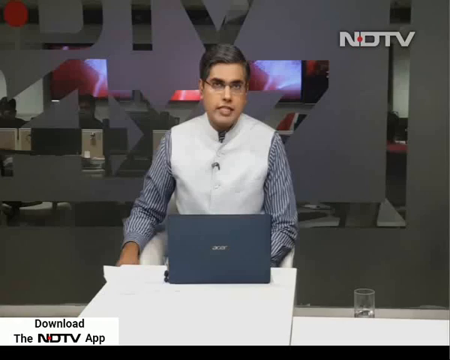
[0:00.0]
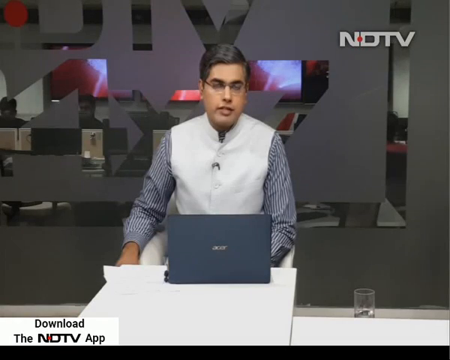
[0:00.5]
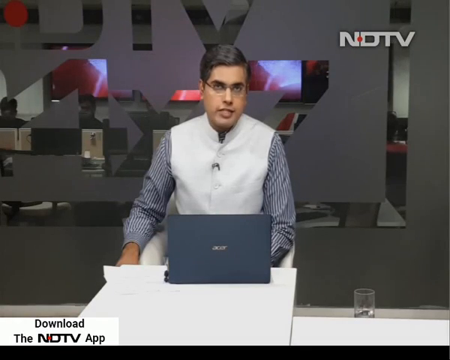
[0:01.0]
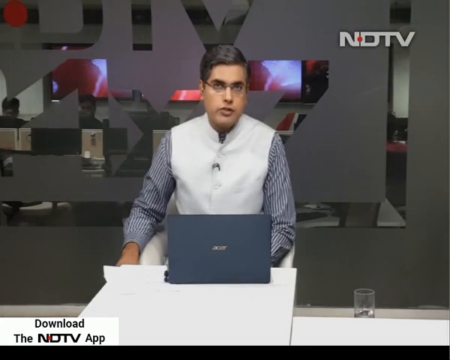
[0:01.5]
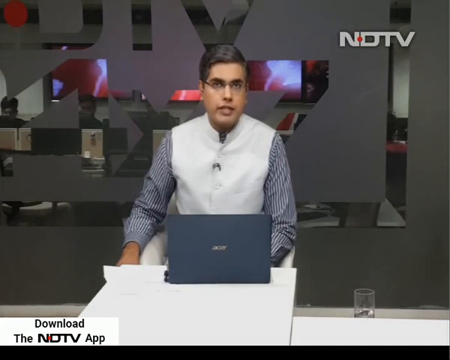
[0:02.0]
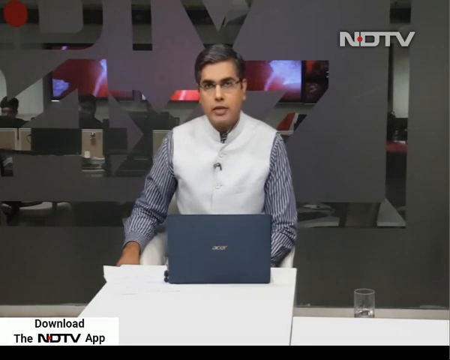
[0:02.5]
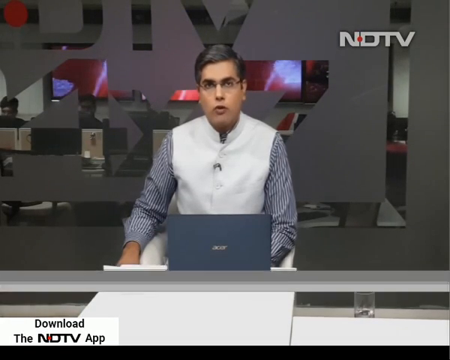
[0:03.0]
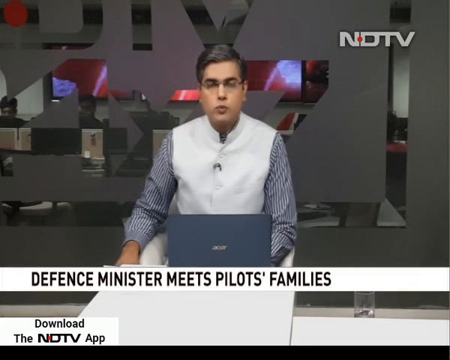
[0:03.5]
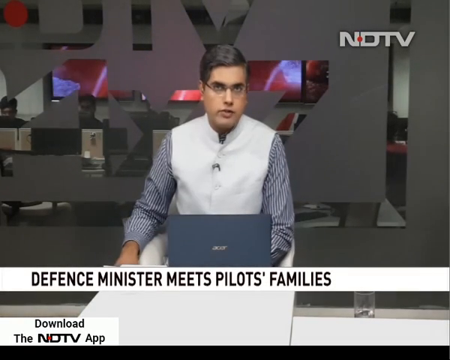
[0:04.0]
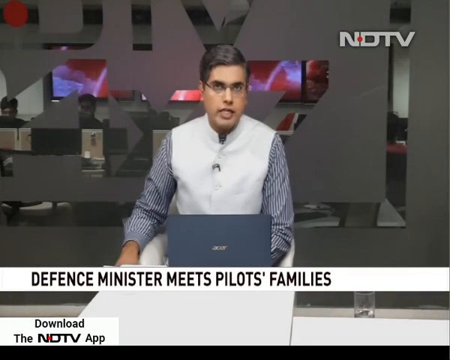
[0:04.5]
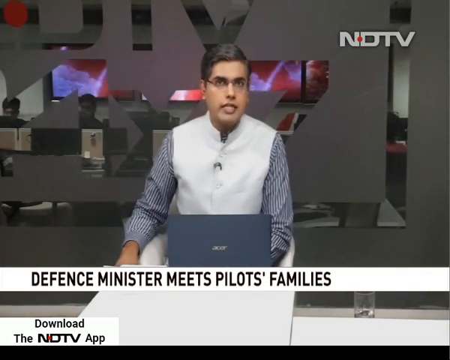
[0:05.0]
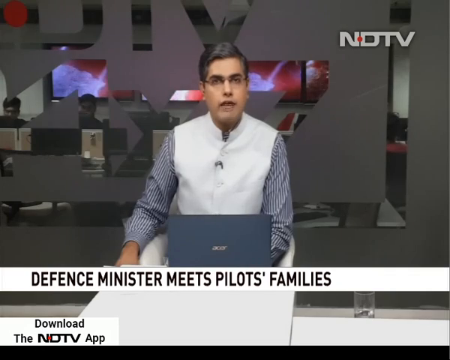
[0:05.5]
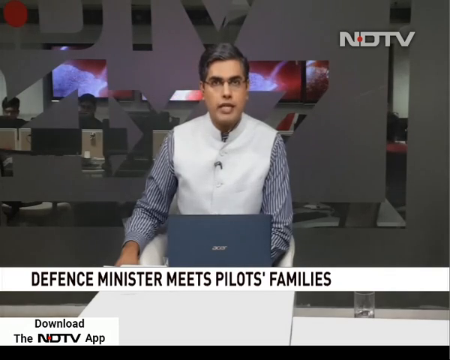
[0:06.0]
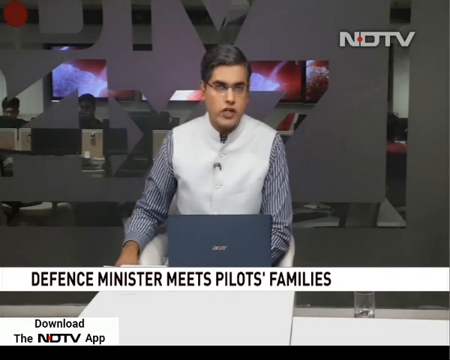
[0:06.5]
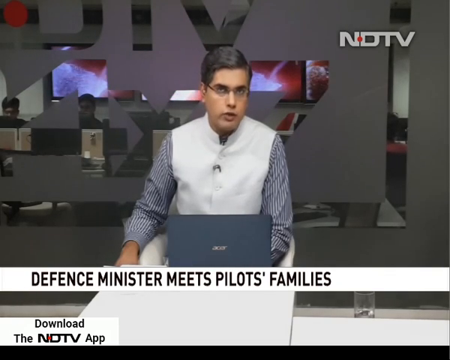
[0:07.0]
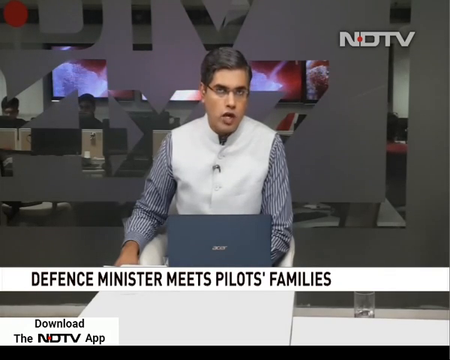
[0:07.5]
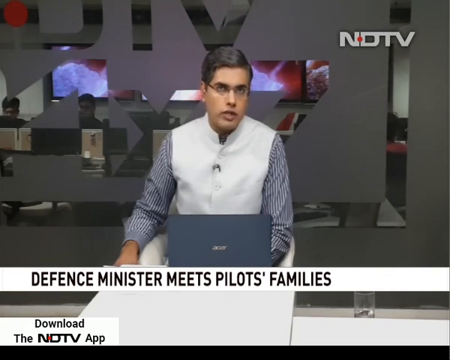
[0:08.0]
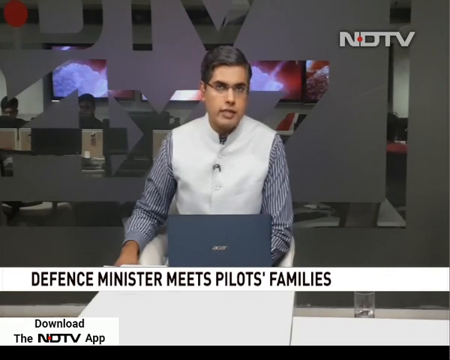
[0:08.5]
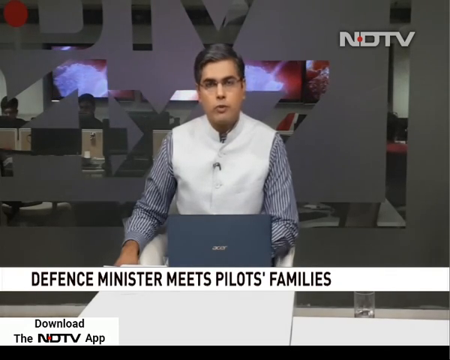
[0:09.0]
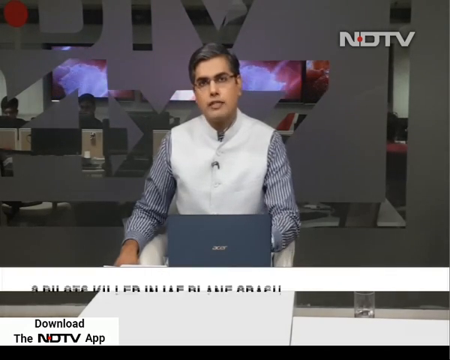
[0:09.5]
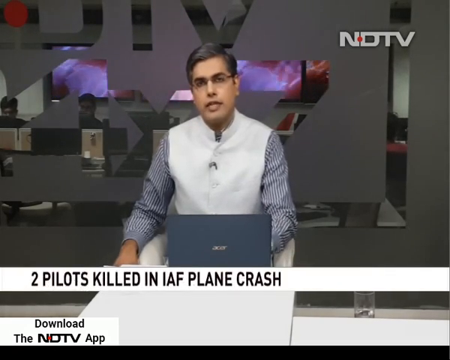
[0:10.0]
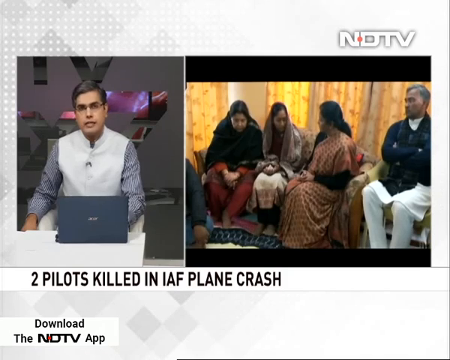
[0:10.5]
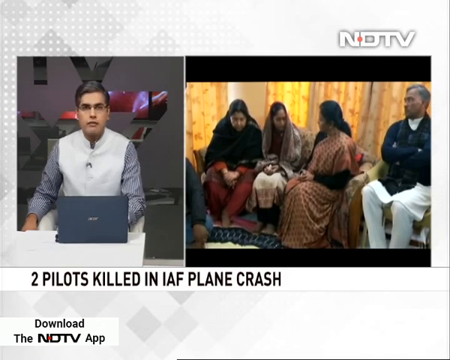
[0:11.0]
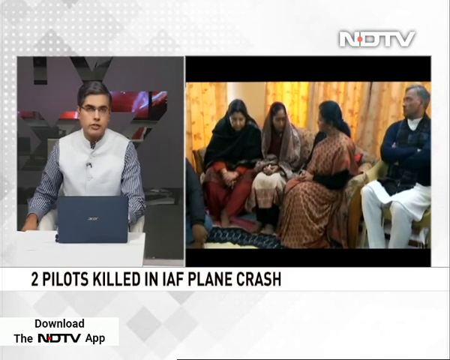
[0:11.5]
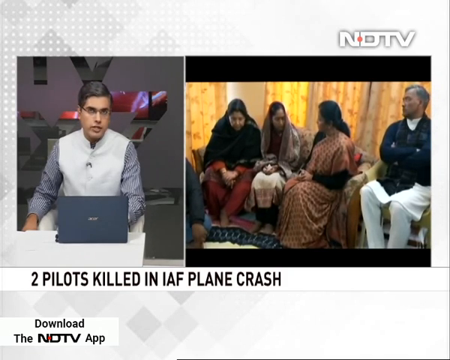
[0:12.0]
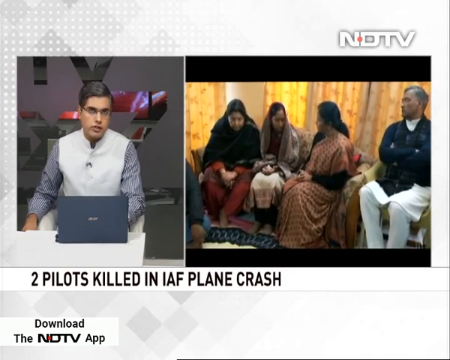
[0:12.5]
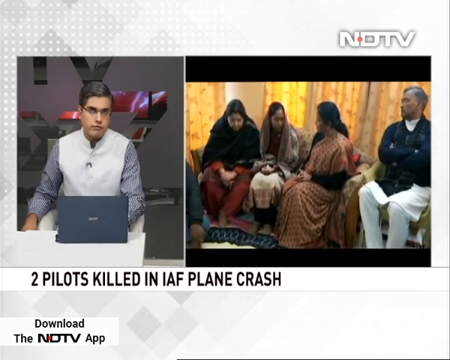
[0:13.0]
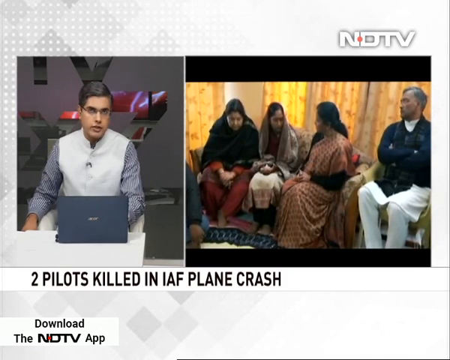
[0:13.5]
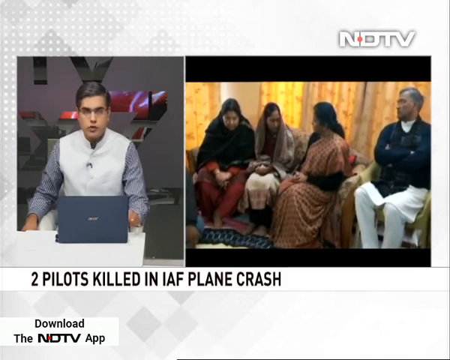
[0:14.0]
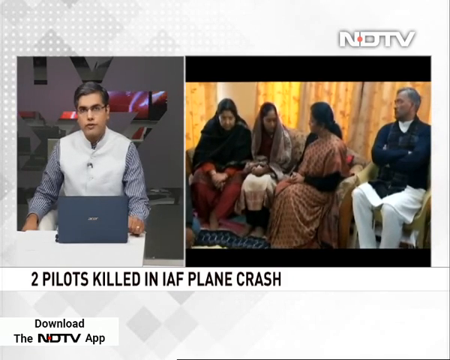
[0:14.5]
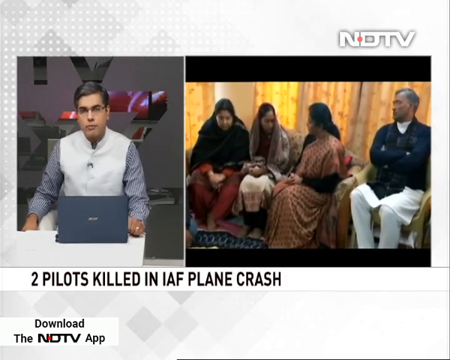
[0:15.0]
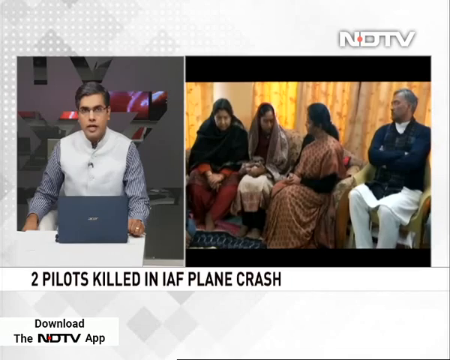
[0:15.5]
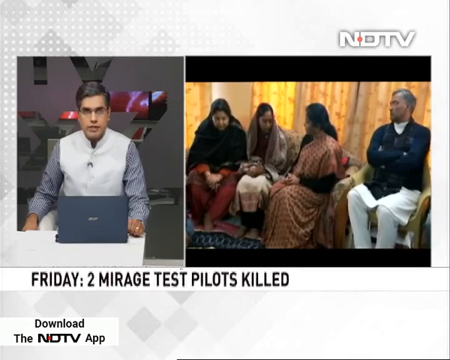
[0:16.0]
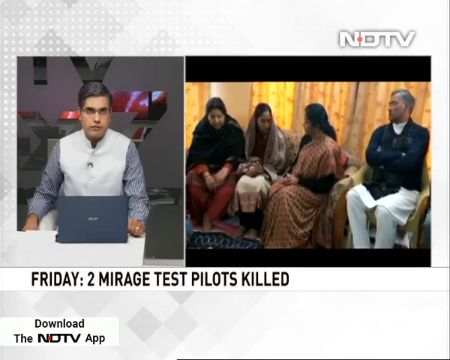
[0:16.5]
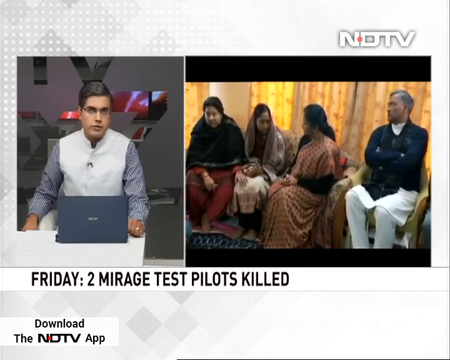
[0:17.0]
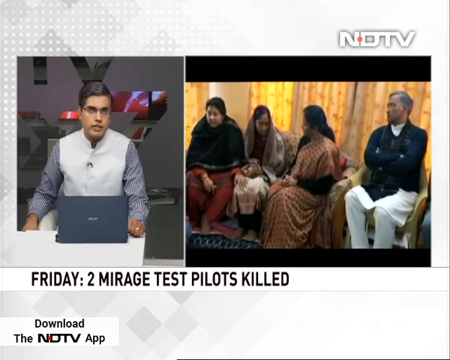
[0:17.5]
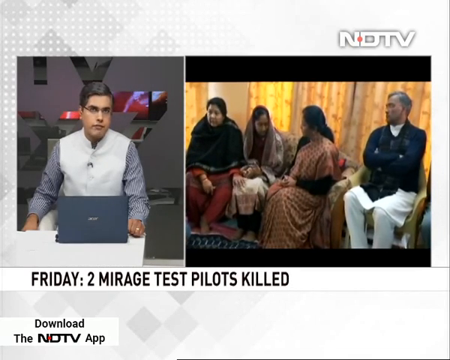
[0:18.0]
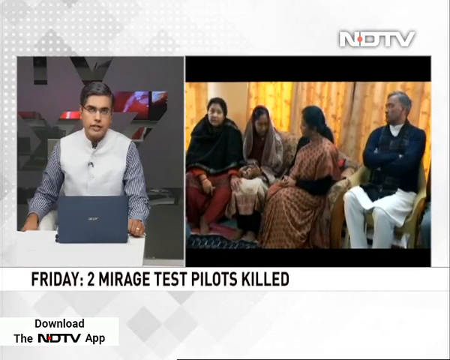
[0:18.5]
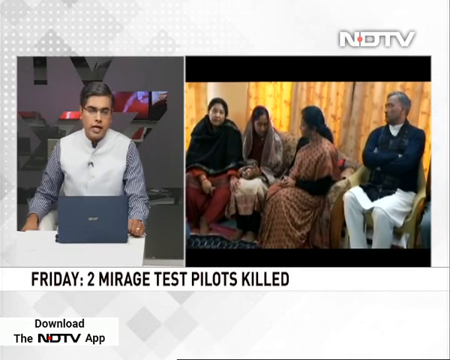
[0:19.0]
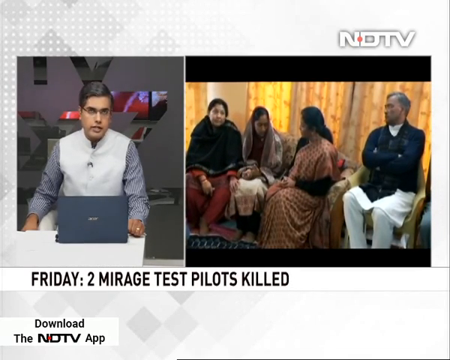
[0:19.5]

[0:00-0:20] A man talks directly to the camera. He appears to be Indian, has black hair, wears glasses, and is dressed in a white waistcoat with a blue striped shirt. The word "NDTV" is in the top right corner, and the bottom left corner offers the option to download the NDTV app. A heading pops up reading "Defence Minister meets pilot families", followed by "two pilots killed in an IAF plane crash". Members of a family are then shown; they seem to be in great sadness and appear very emotional. Two or three females are visible, and to the far right there is a man wearing a black jacket with white pants.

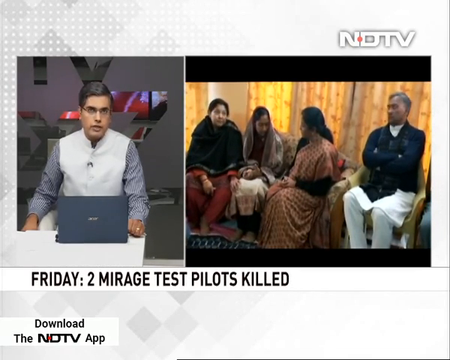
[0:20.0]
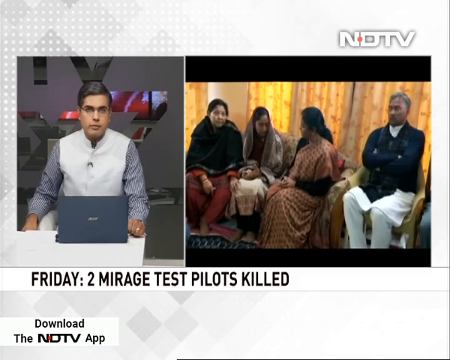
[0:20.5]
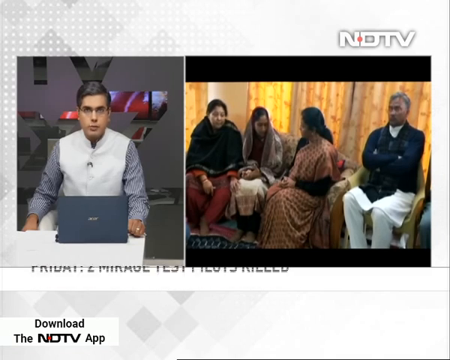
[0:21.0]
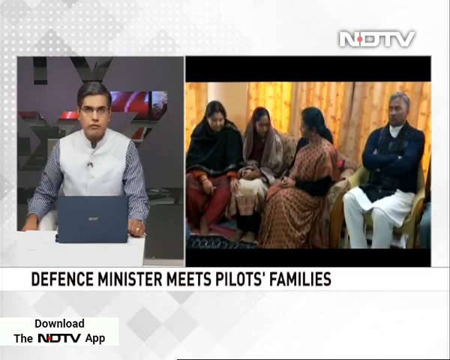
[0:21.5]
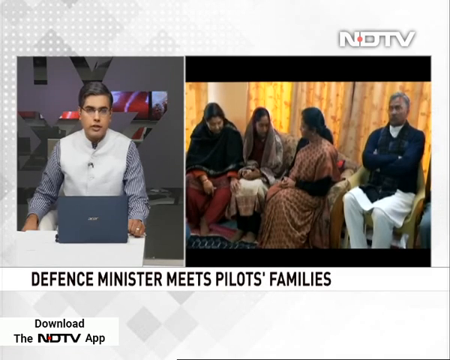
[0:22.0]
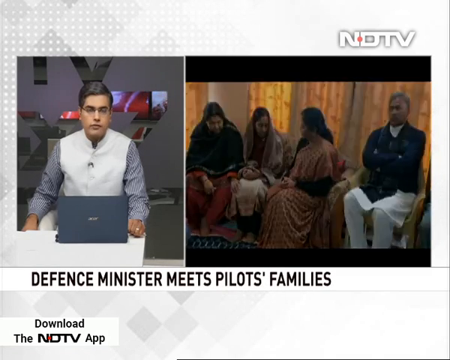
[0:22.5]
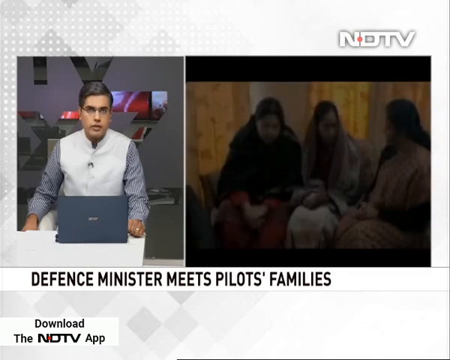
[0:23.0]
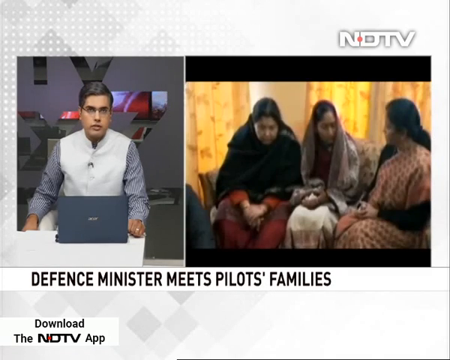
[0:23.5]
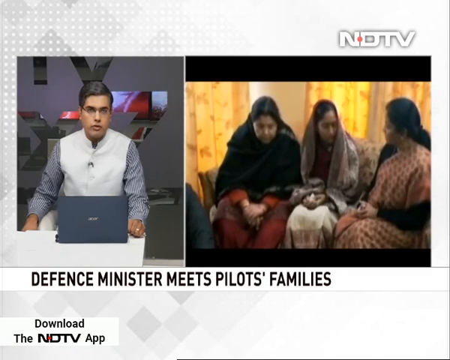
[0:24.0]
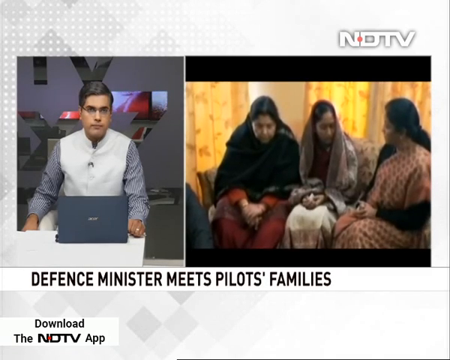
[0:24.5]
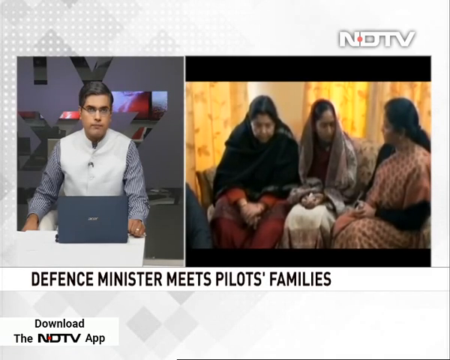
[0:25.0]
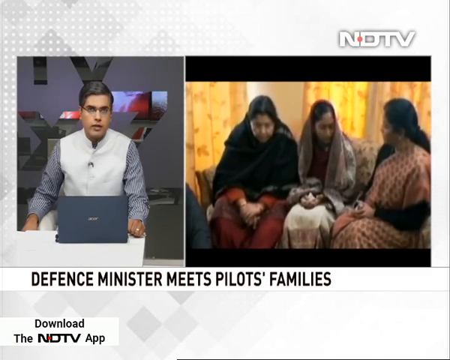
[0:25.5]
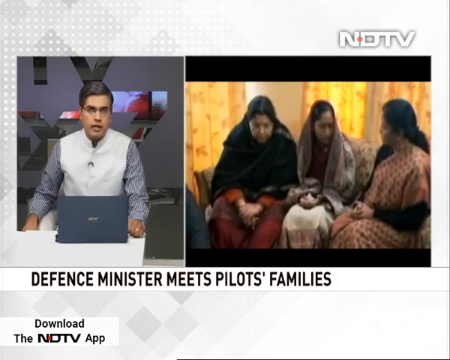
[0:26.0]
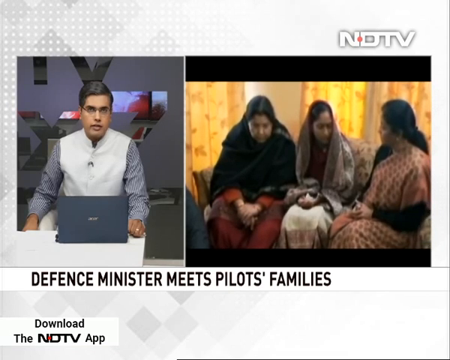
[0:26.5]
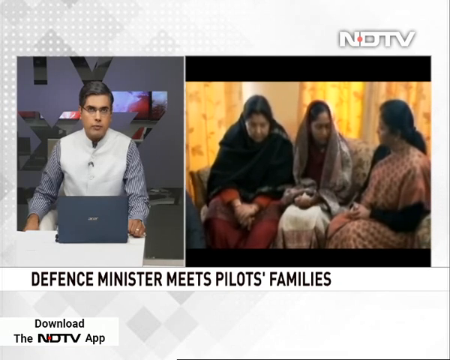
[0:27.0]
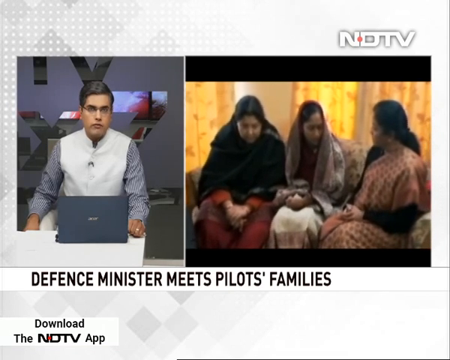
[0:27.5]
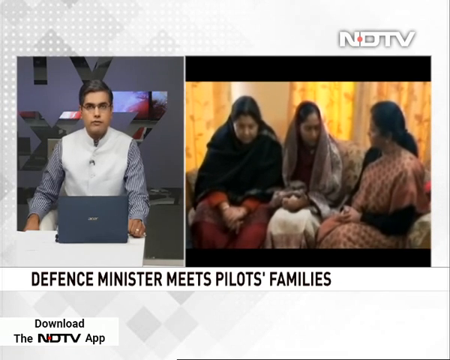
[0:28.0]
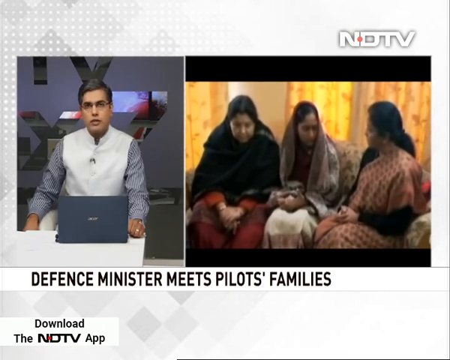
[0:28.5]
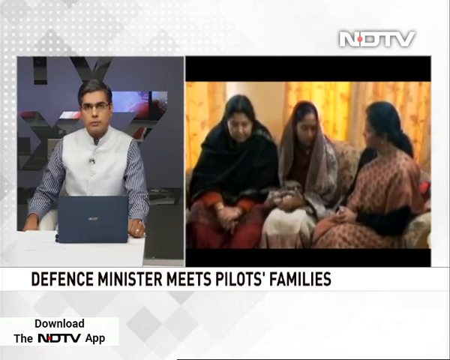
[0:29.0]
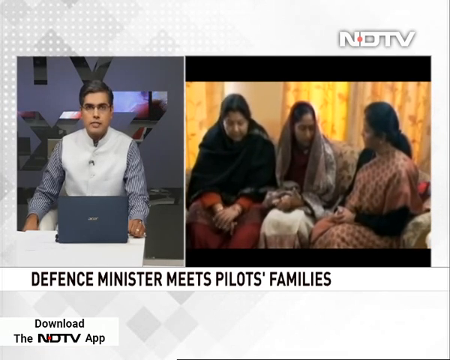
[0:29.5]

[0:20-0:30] An Indian news reporter for NDTV is shown, with the word "NDTV" displayed in the top right corner. He wears glasses, has short black hair, and is dressed in a white waistcoat with a blue striped shirt, sitting comfortably in front of a laptop. The heading seems to be about a plane crash. Footage of the pilot's families follows, showing them in great sorrow; three females are in a very emotional state.